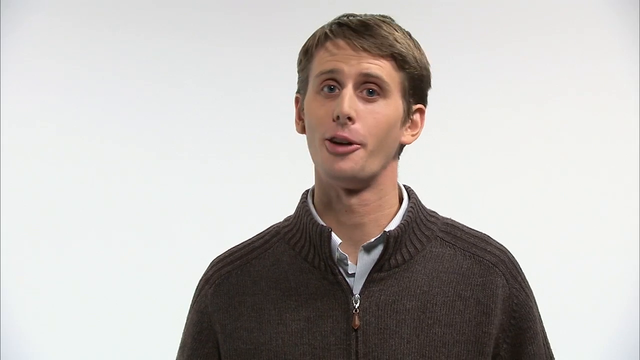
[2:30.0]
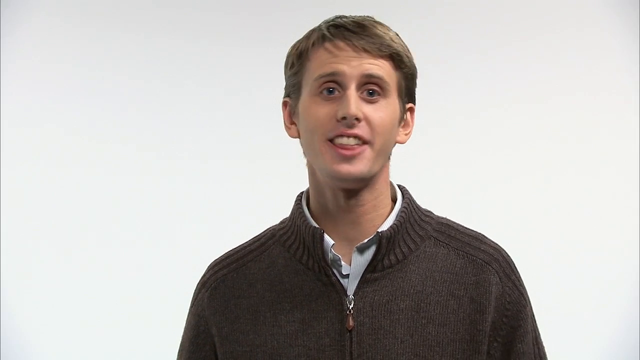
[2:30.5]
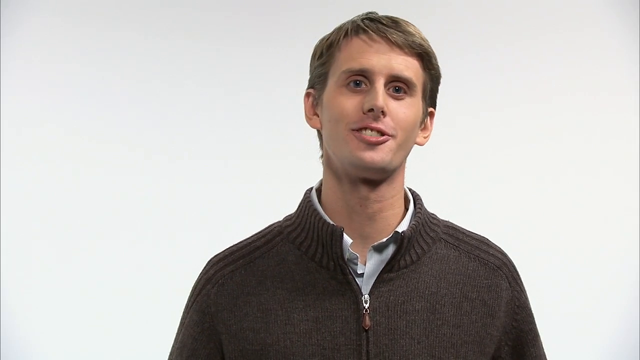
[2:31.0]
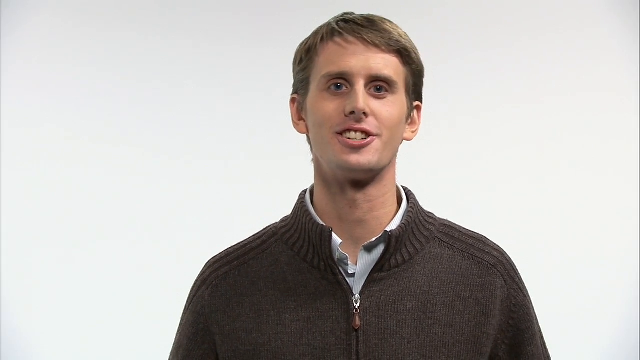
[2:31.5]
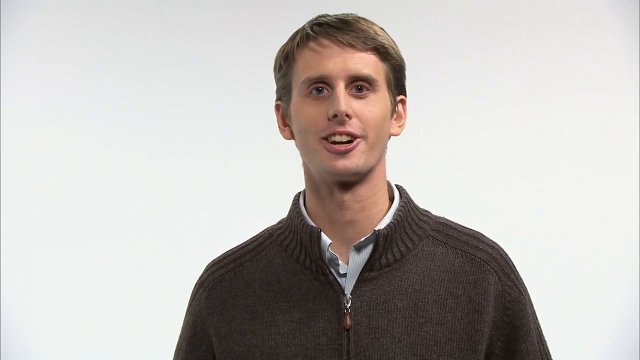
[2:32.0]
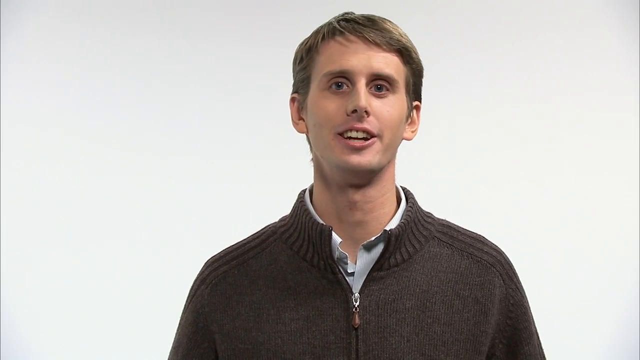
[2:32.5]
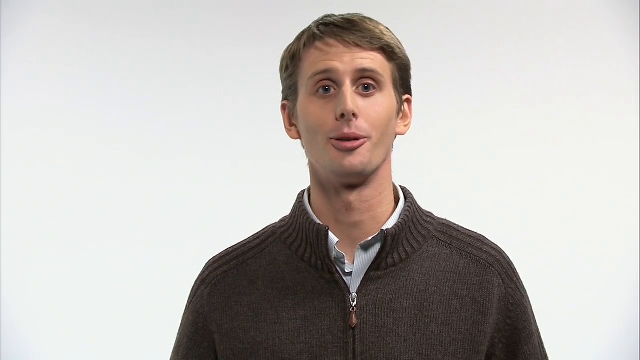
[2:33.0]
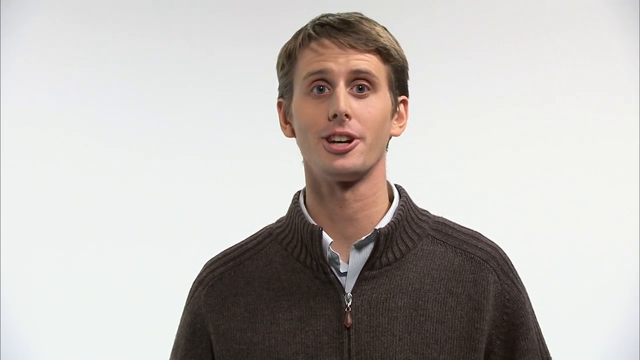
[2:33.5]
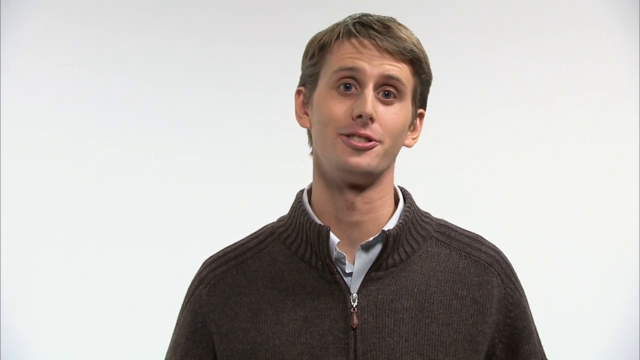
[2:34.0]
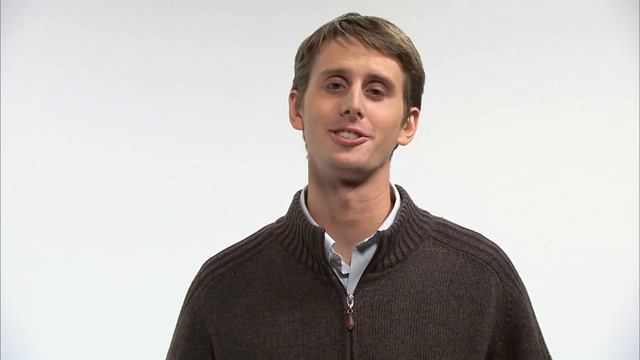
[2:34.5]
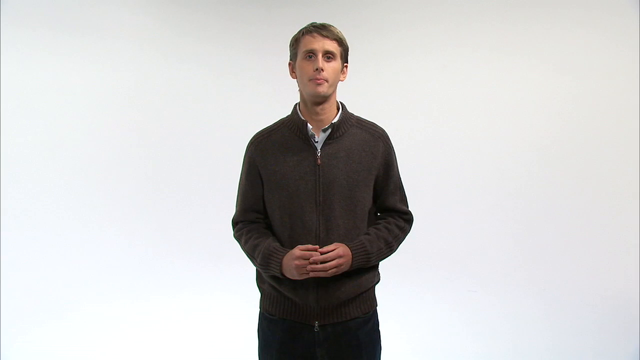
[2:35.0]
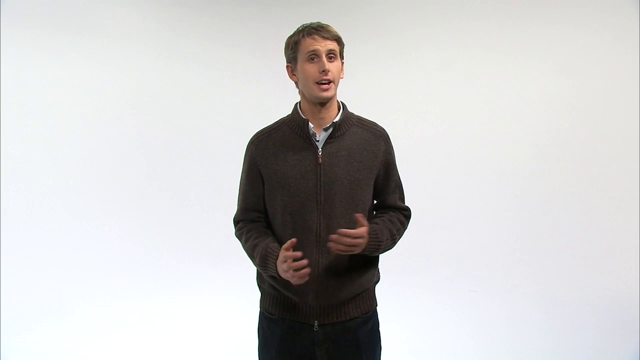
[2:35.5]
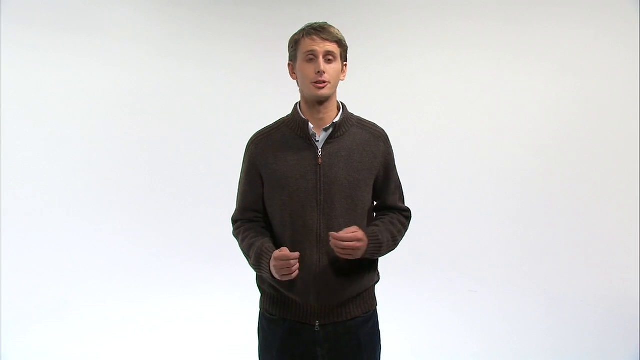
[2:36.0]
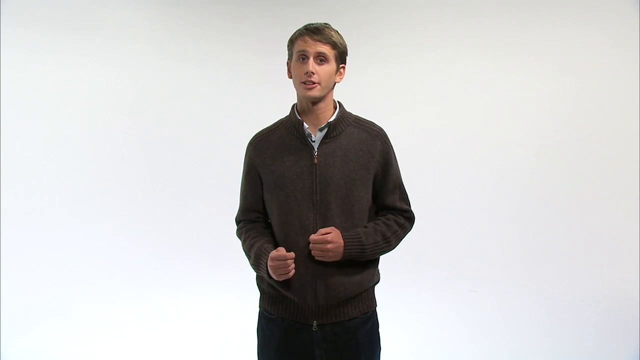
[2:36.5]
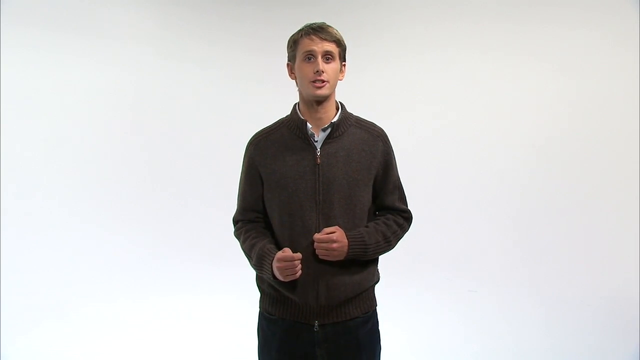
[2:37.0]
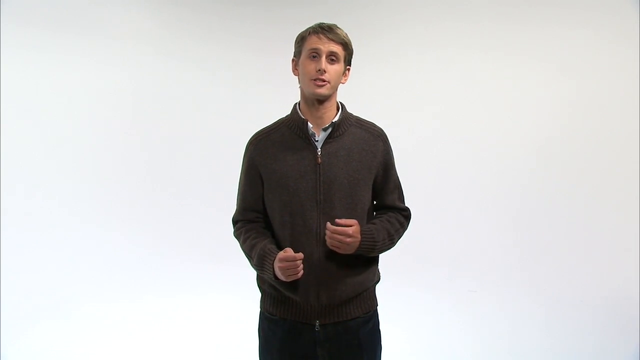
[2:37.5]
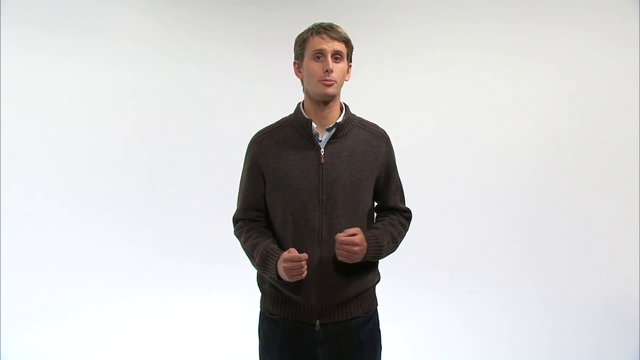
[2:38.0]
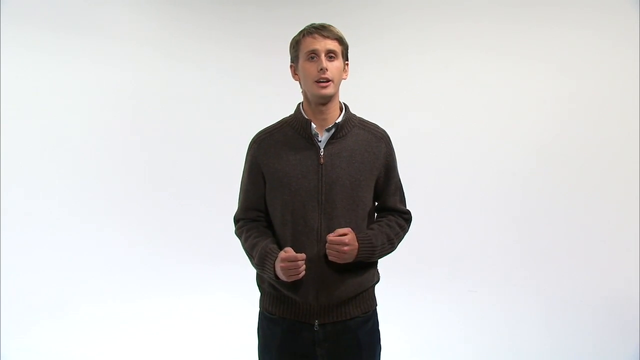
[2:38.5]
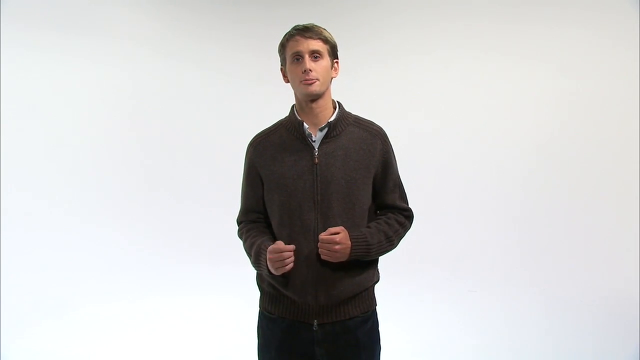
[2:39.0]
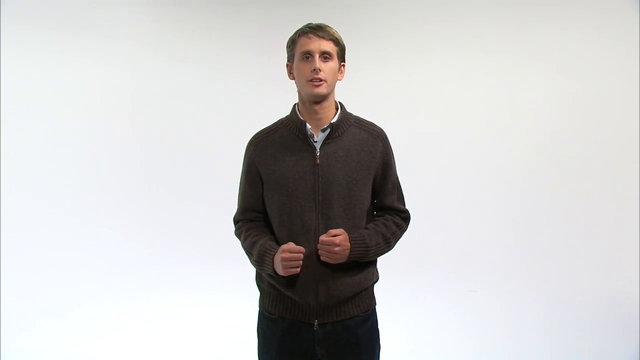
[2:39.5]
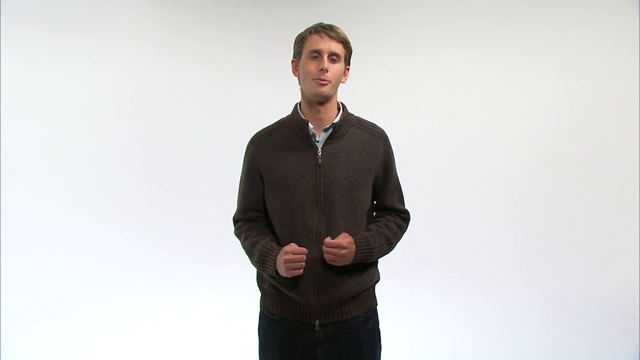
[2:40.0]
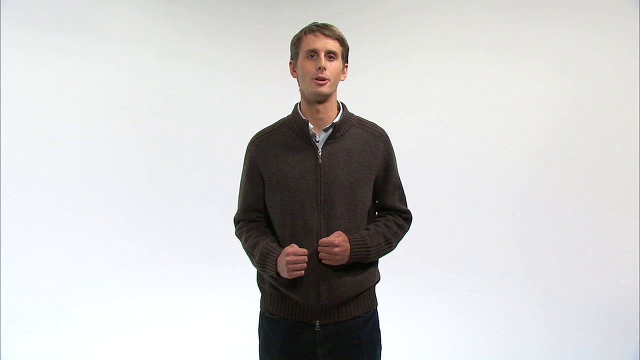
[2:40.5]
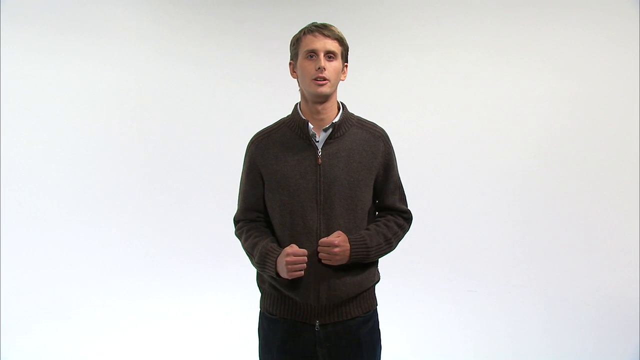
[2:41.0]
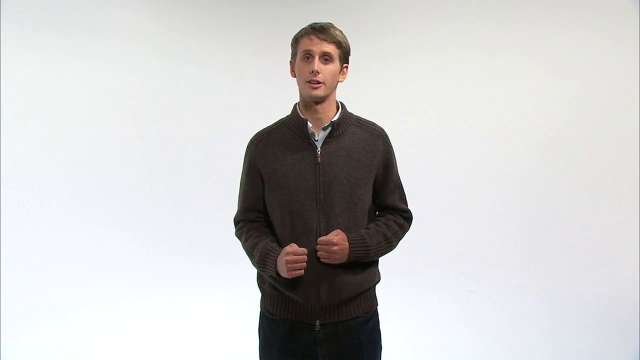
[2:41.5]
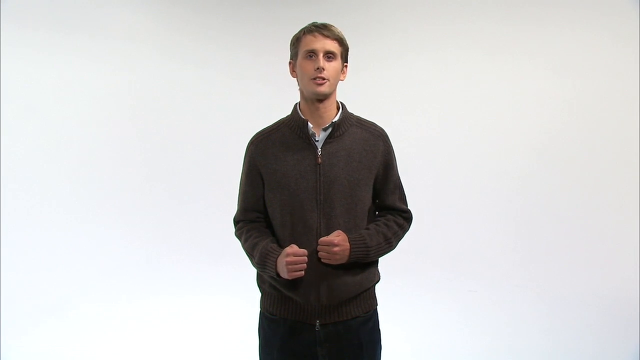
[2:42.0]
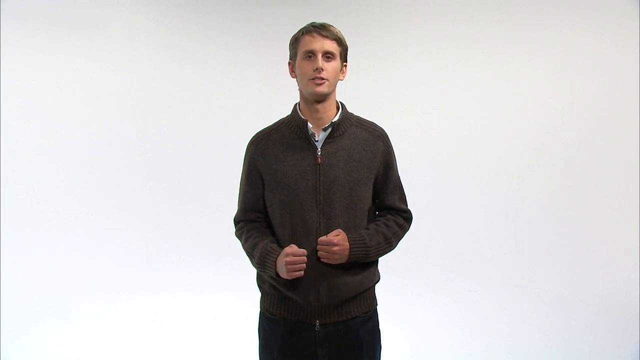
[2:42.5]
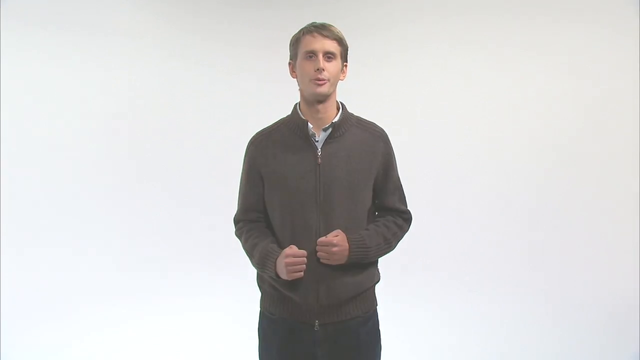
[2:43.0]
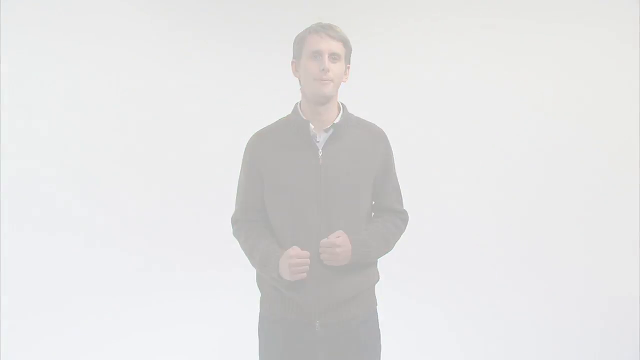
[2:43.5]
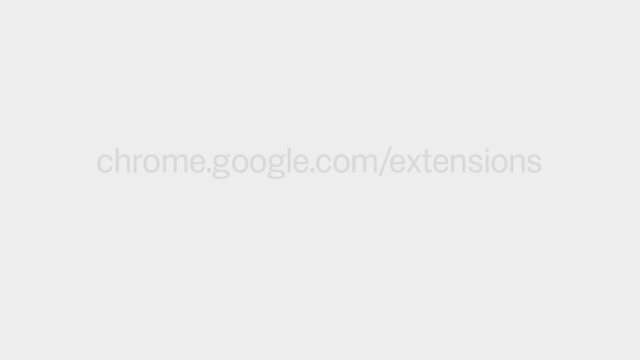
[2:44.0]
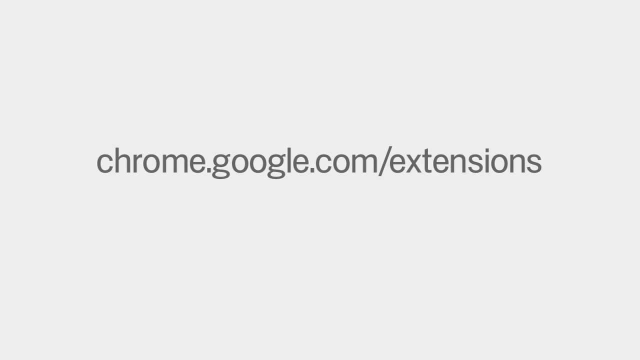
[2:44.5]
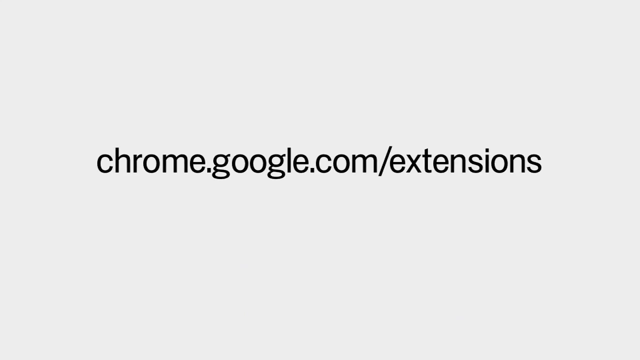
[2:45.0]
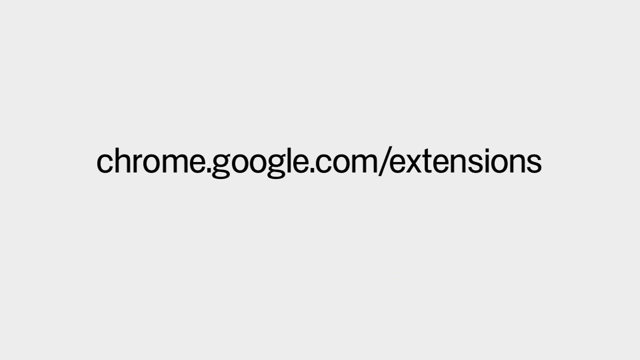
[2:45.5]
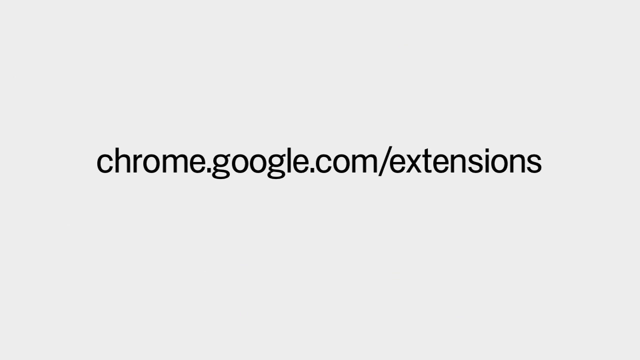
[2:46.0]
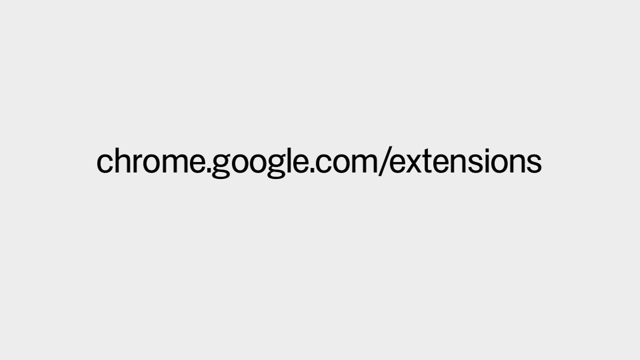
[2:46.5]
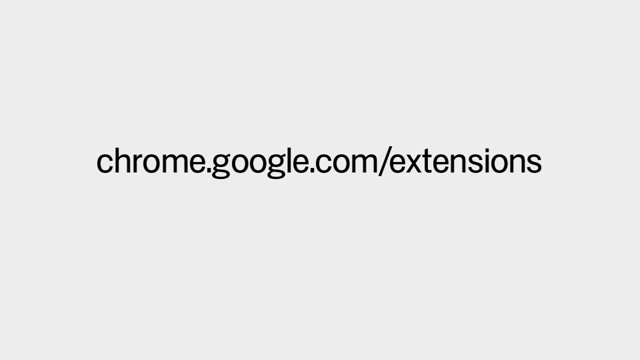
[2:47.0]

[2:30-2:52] A man talks to the screen. He wears a sweater, has short hair and very big eyes, and is kind of smiling as he talks. He looks very friendly, moves his head to the left and right, and uses his eyebrows to be very expressive. The camera zooms out to show him down to about his waist, with his hands at about waist level, moving his left and right hands as he speaks. He keeps a closed fist, kind of opening his hands a little, one hand at a time, then keeping them closed tight again. The screen then changes to a gray background with black text in the center that says "chrome.google.com/extensions", which stays on screen for a while as the video ends.